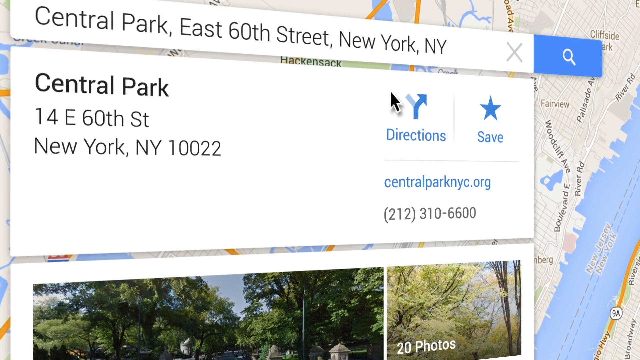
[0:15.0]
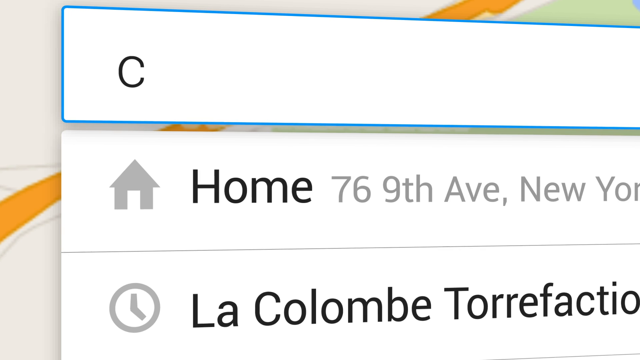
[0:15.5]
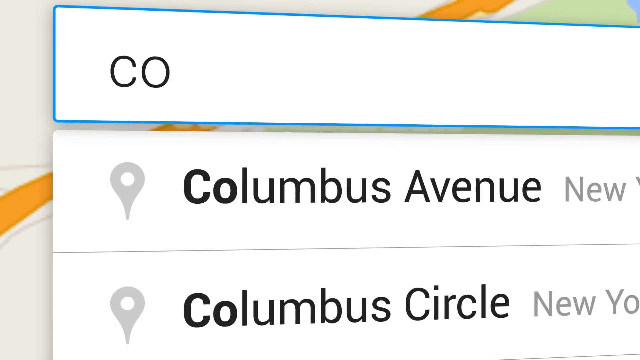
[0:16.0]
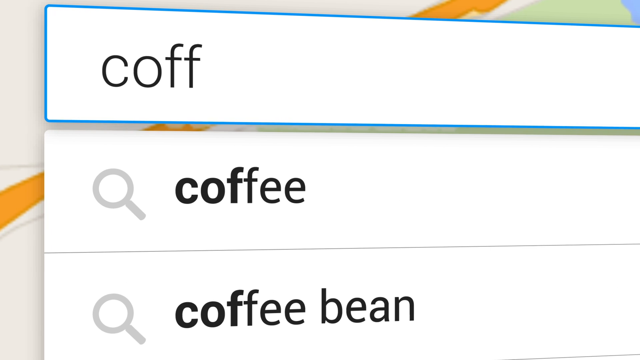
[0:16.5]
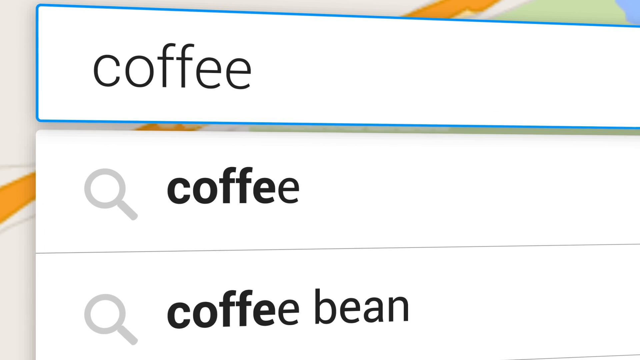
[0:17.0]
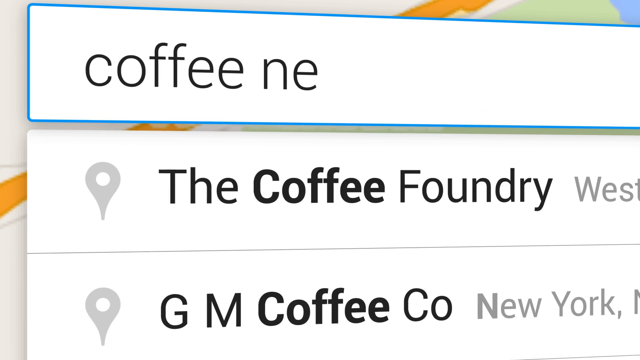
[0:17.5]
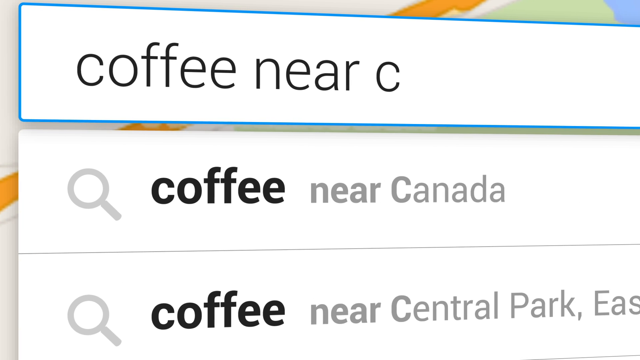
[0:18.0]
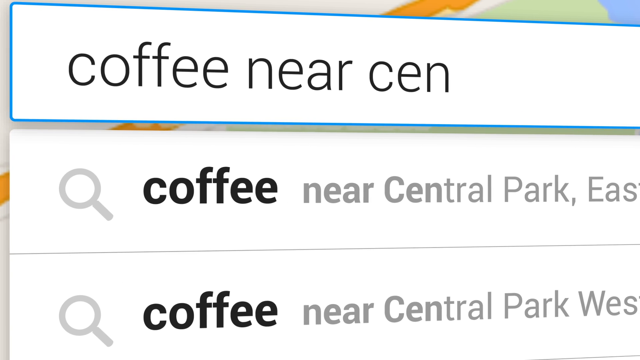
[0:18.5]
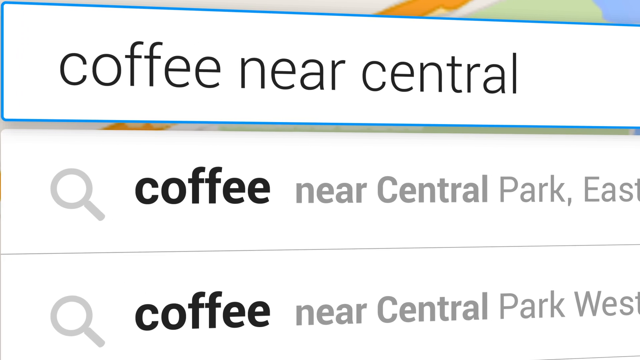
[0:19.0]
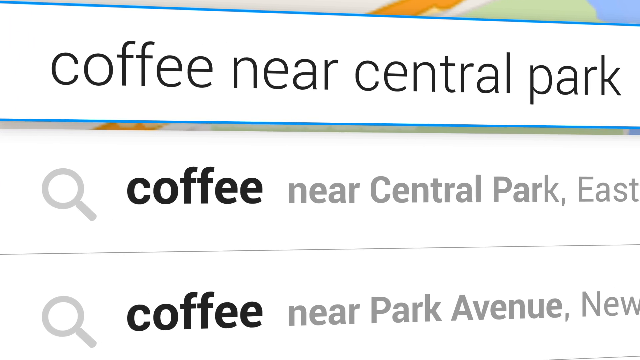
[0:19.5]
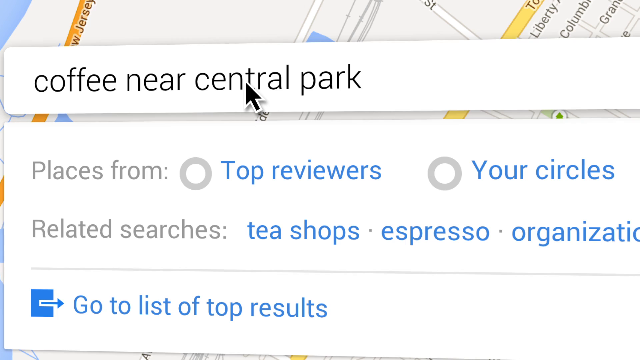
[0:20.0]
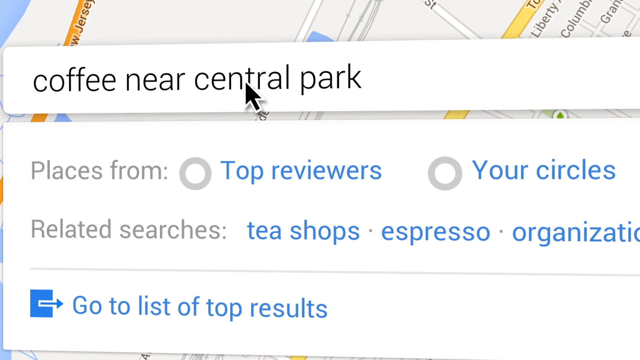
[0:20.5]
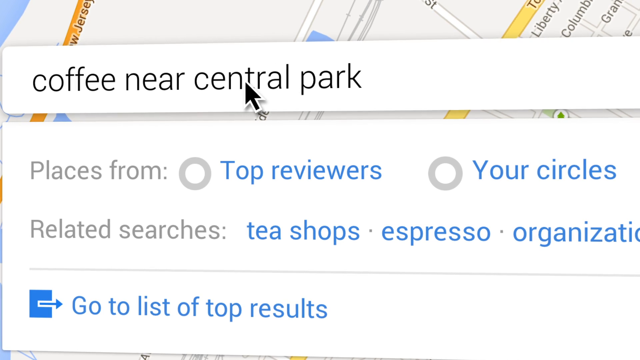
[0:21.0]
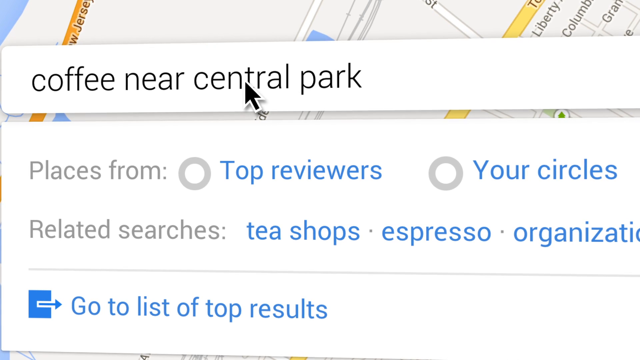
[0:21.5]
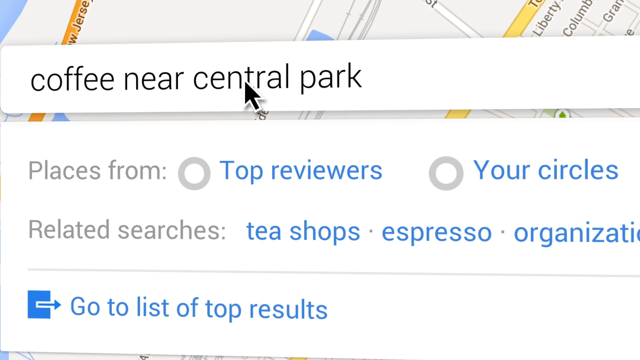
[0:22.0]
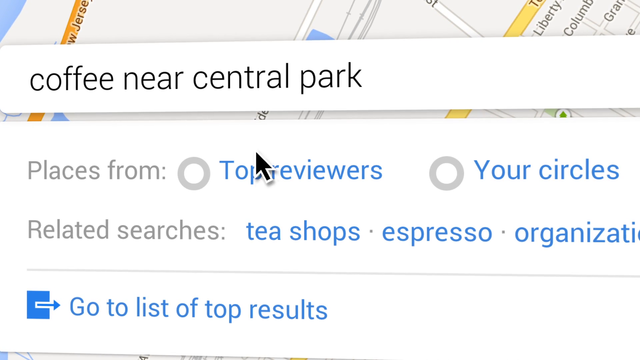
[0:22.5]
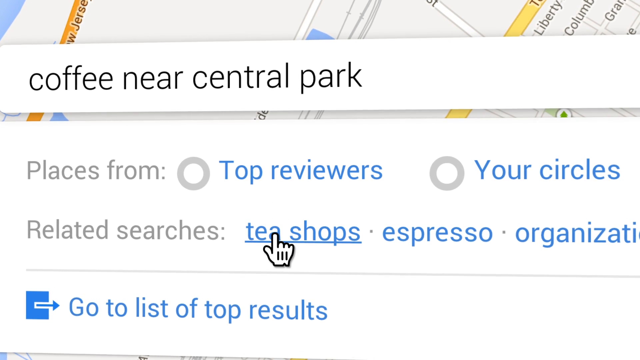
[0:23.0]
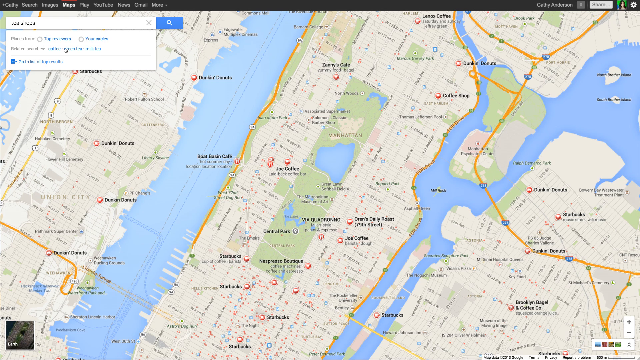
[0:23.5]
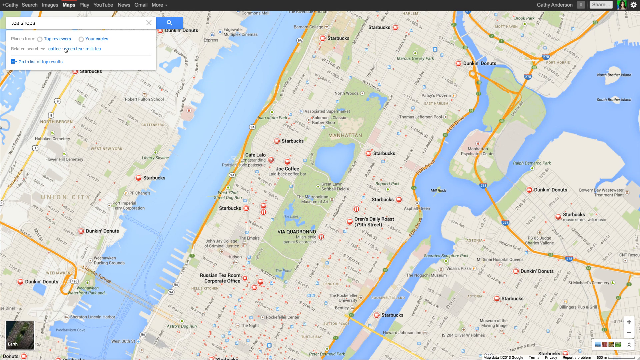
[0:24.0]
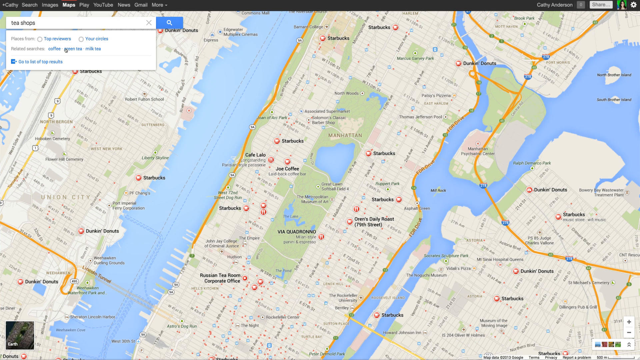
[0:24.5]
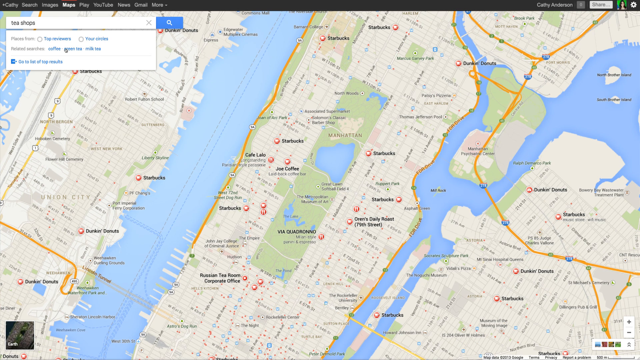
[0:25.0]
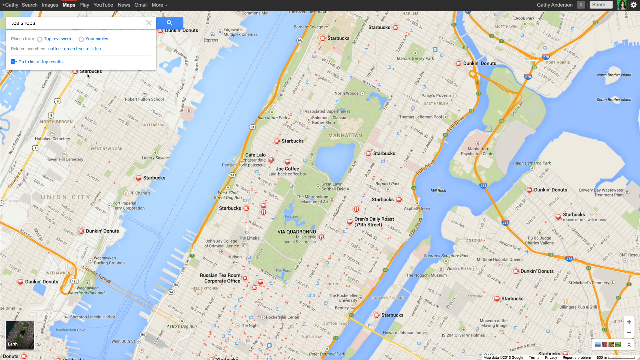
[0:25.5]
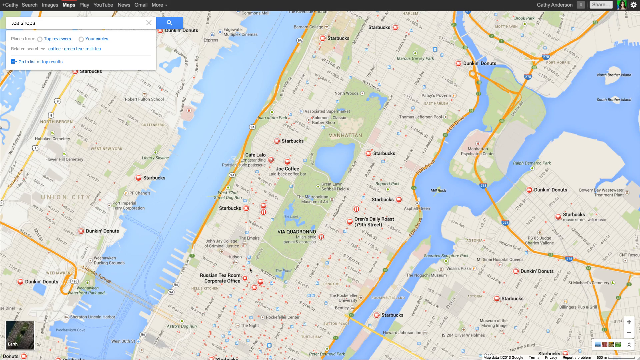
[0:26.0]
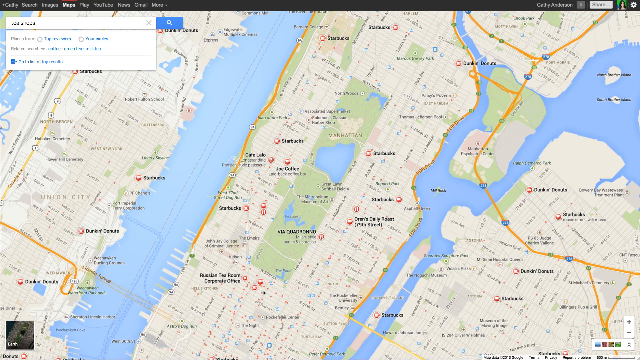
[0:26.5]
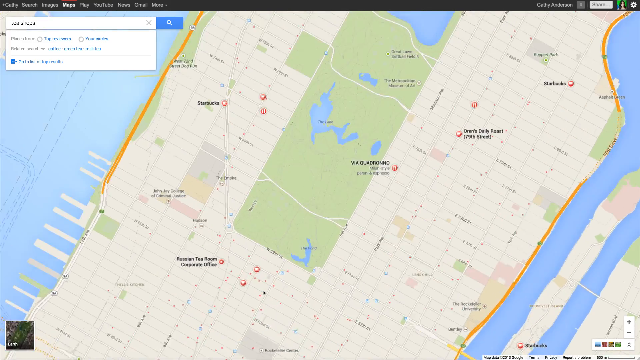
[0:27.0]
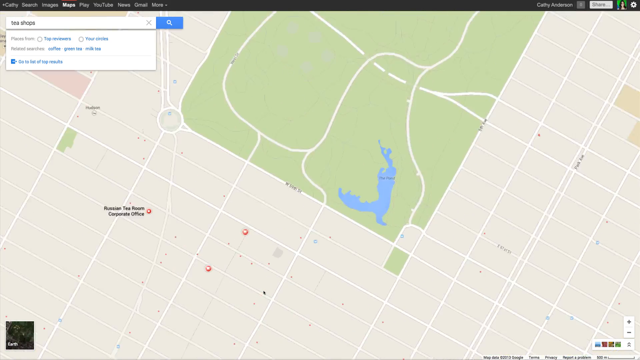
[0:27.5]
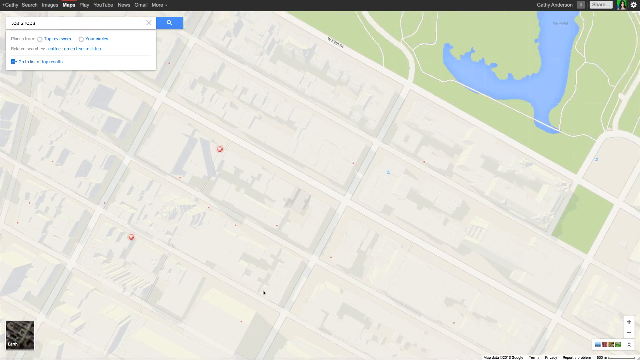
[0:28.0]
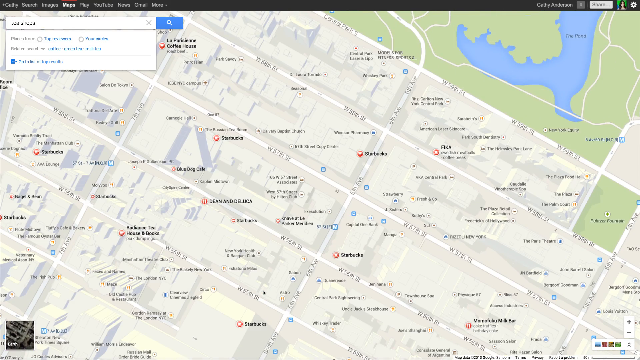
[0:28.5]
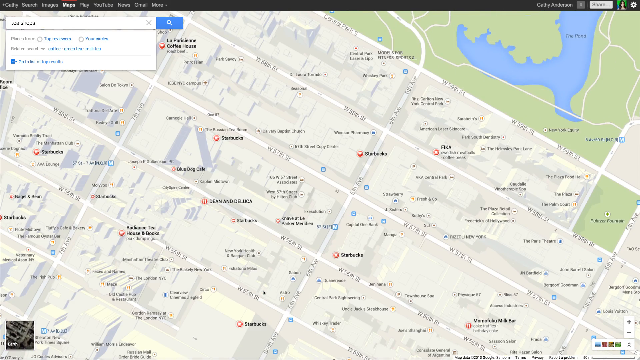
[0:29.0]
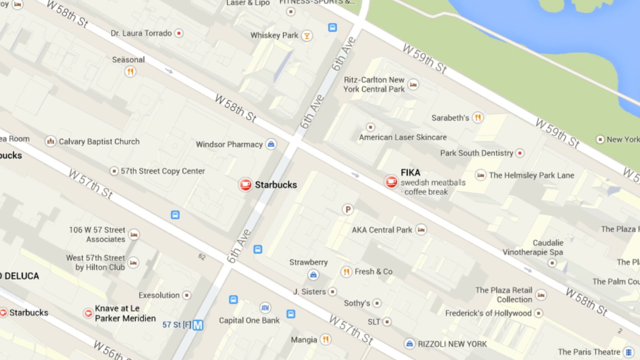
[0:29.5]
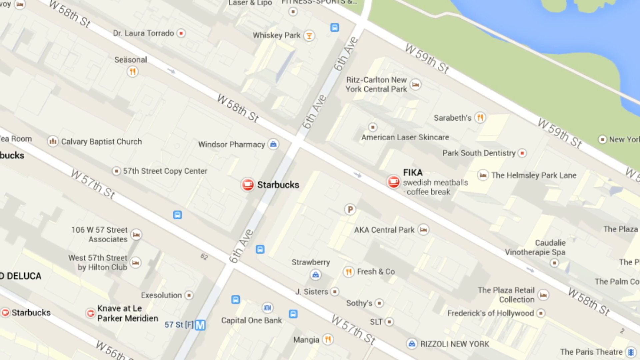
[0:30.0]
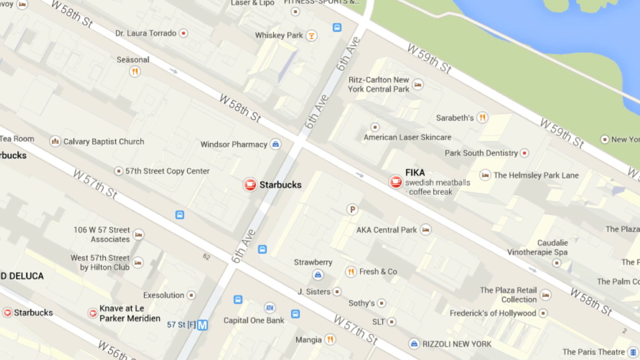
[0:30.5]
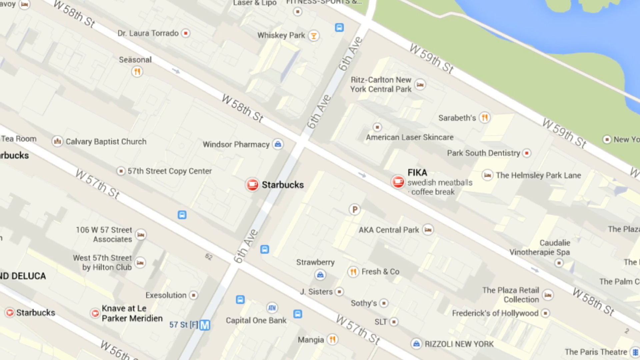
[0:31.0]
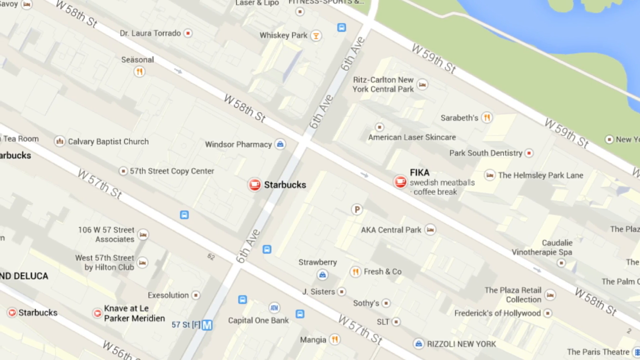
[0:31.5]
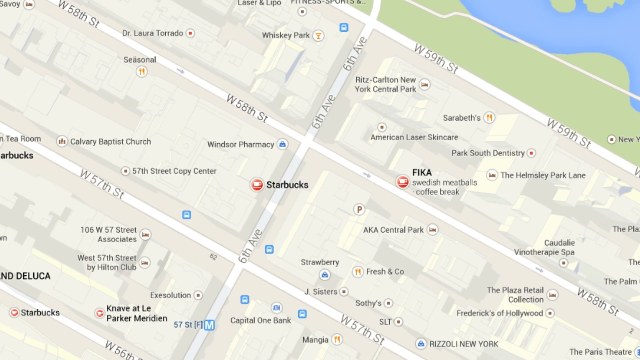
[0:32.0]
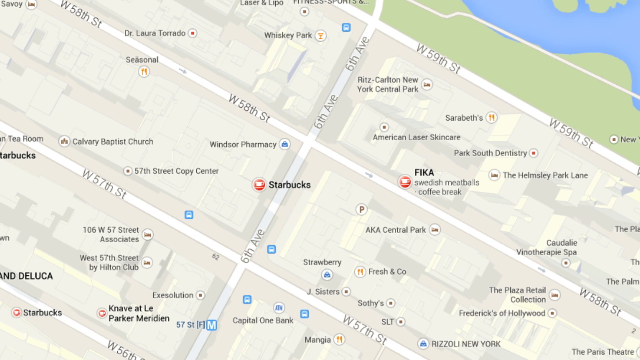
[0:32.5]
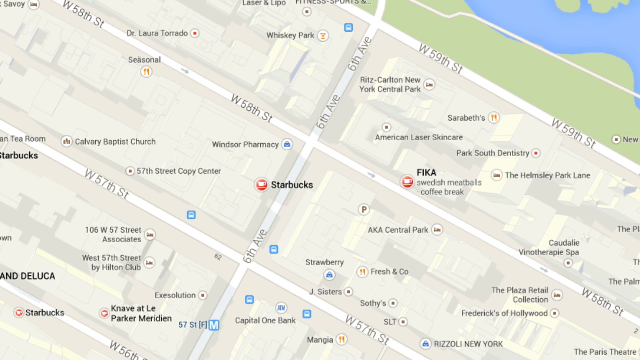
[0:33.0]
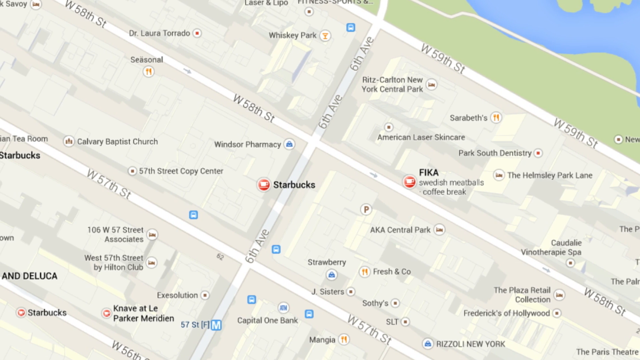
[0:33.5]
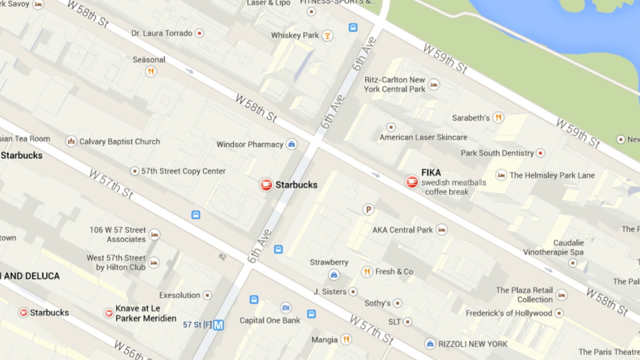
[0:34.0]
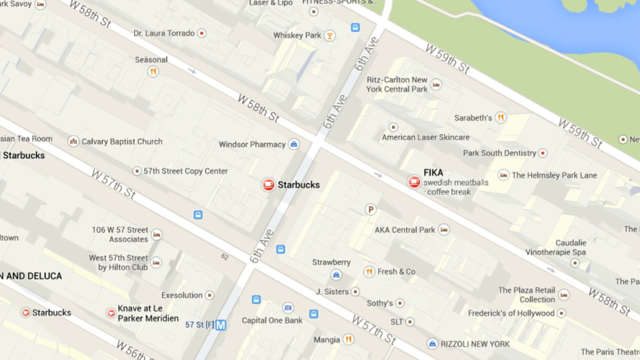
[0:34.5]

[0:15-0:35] Someone types "coffee near Central Park" into the search, and the mouse clicks on it. The mouse moves down and clicks on tea shops, and the map zooms in on the area by Central Park. Starbucks and some of the streets appear, including 6th Ave. The mouse scrolls over and the map zooms into the streets.